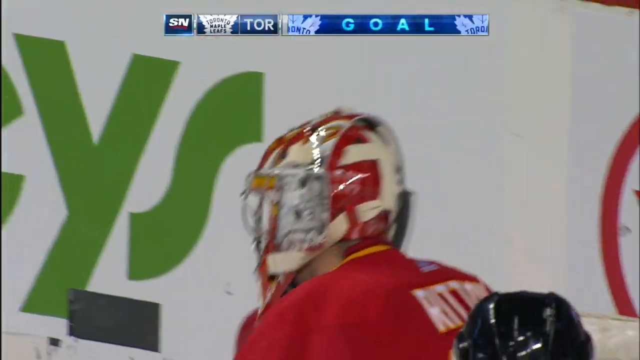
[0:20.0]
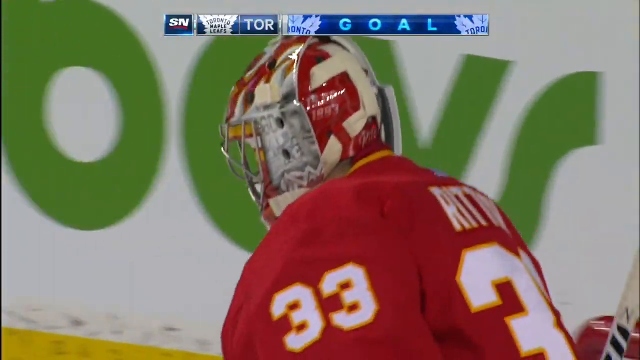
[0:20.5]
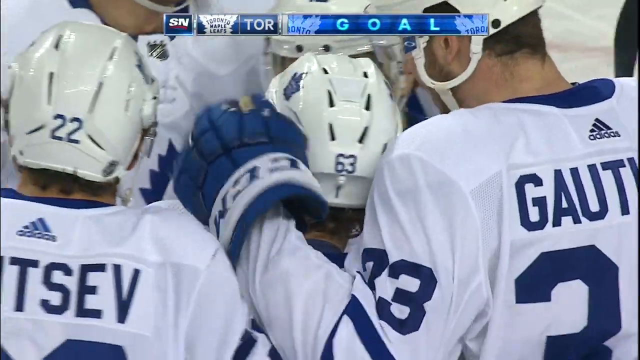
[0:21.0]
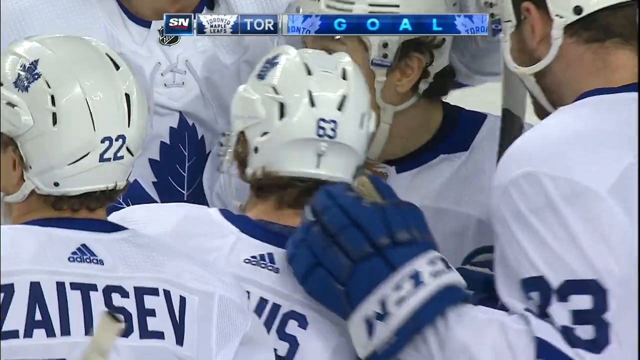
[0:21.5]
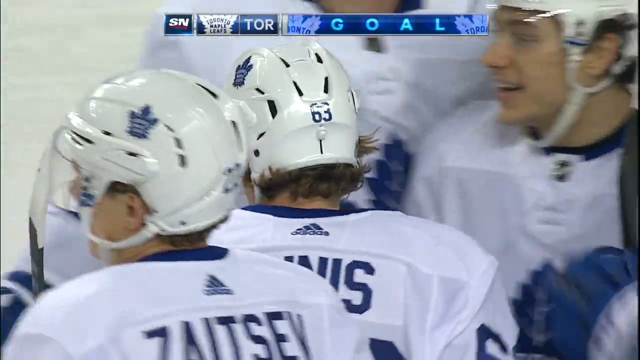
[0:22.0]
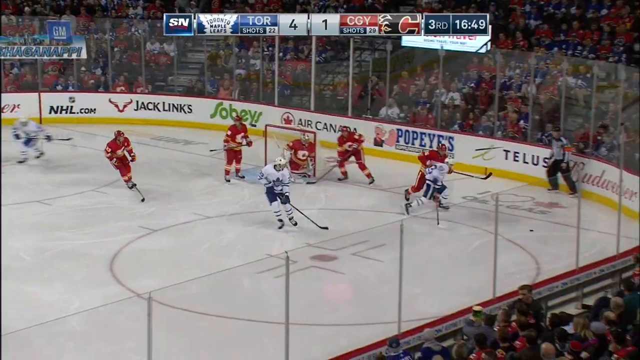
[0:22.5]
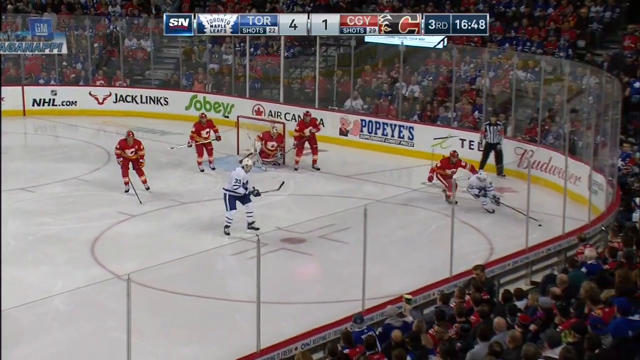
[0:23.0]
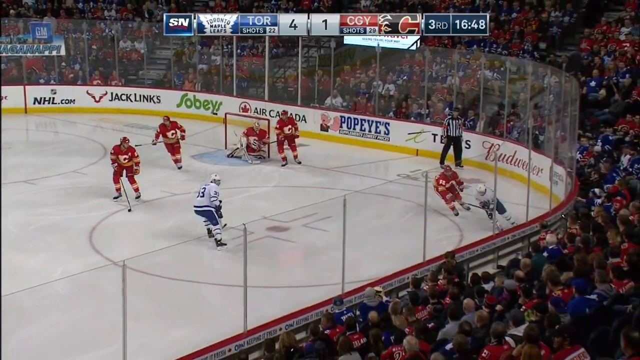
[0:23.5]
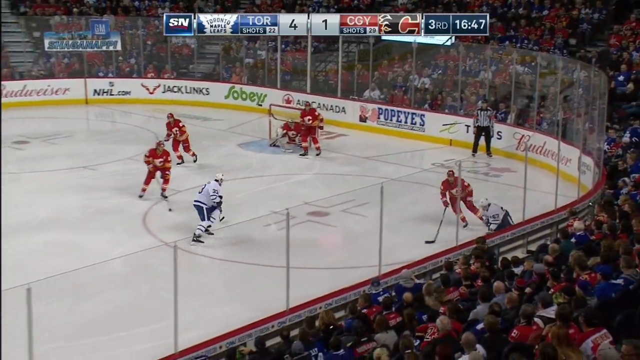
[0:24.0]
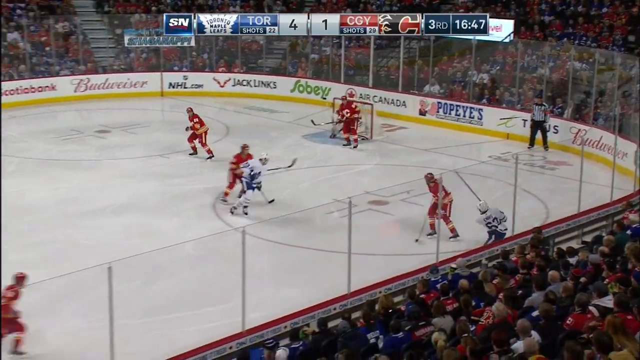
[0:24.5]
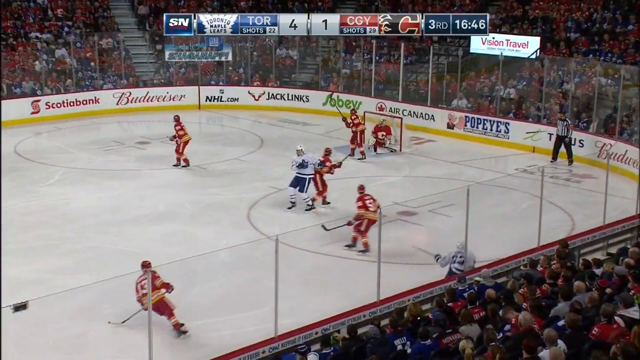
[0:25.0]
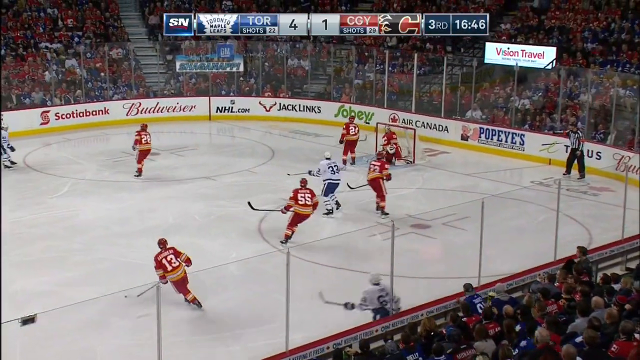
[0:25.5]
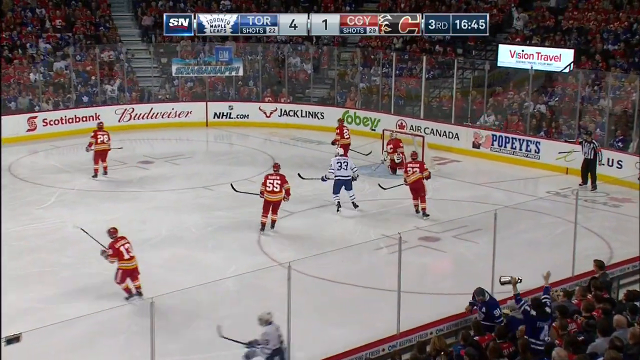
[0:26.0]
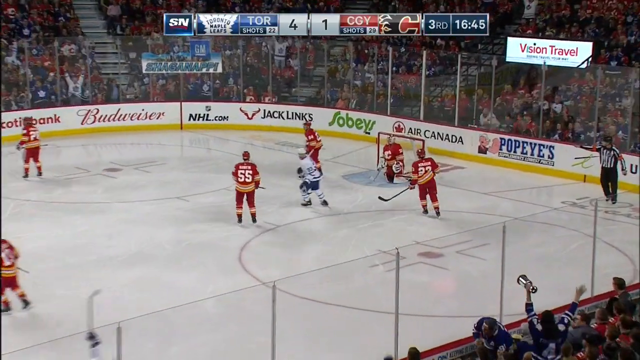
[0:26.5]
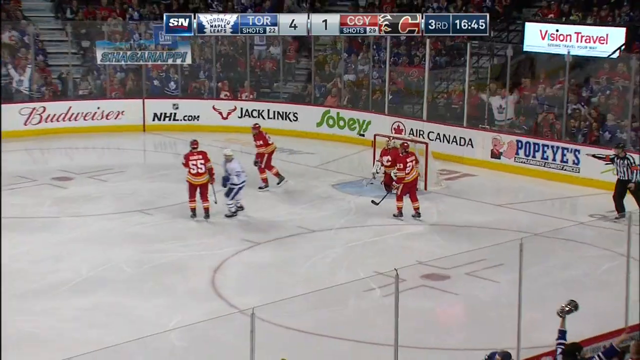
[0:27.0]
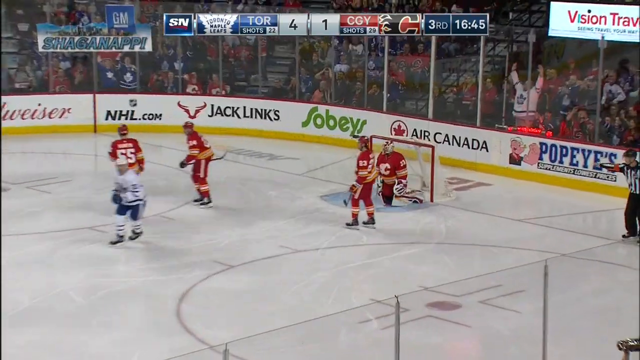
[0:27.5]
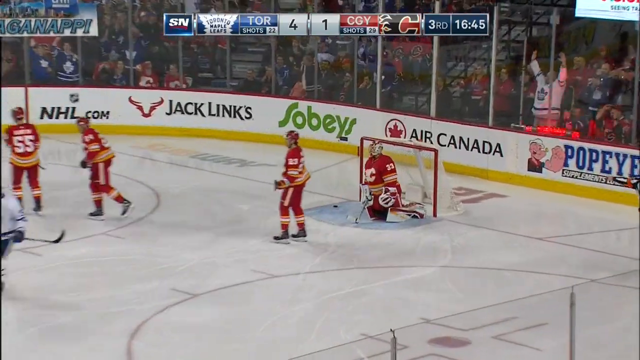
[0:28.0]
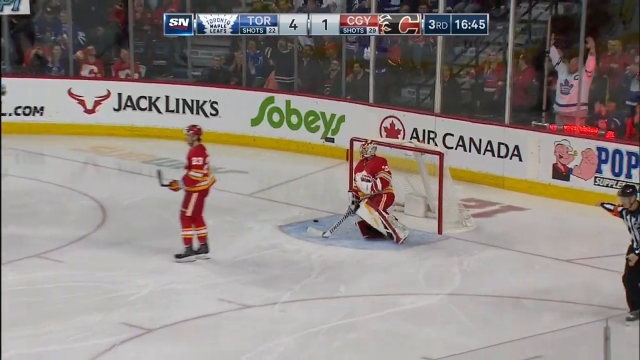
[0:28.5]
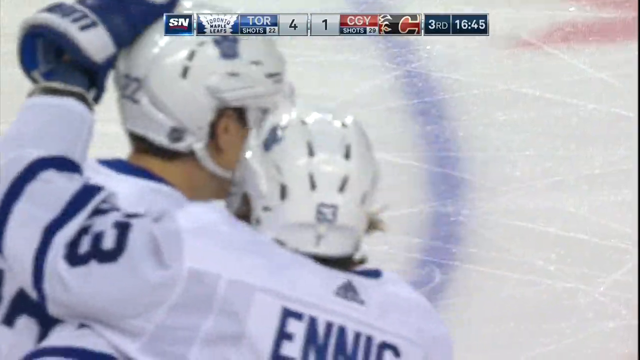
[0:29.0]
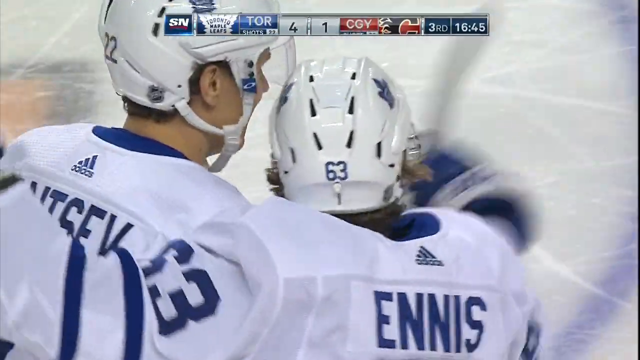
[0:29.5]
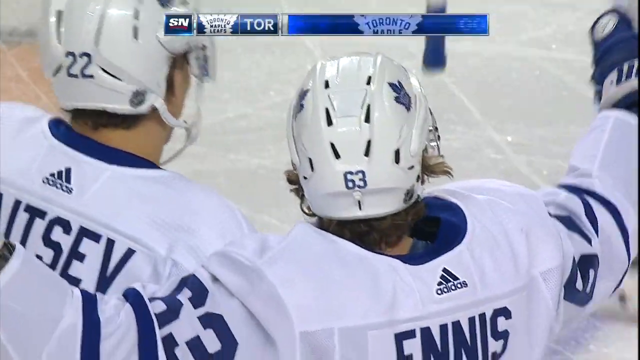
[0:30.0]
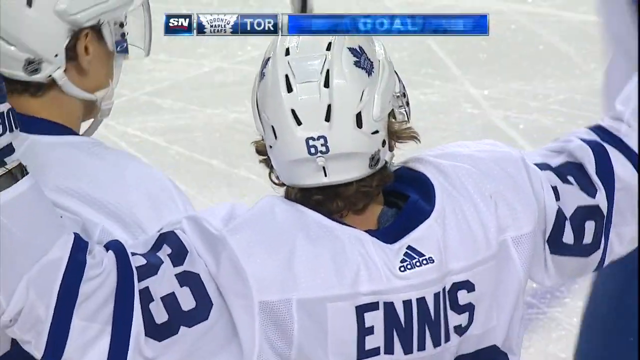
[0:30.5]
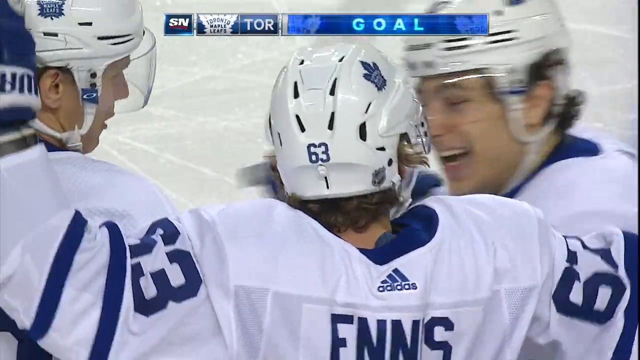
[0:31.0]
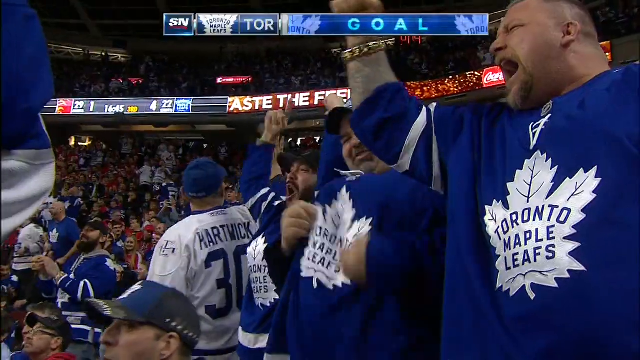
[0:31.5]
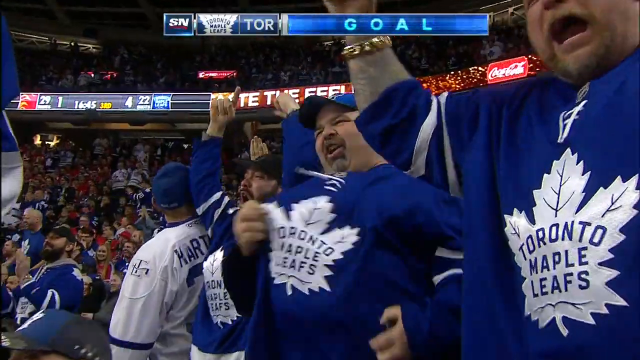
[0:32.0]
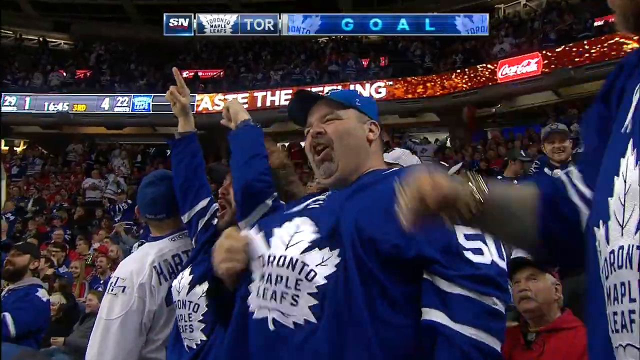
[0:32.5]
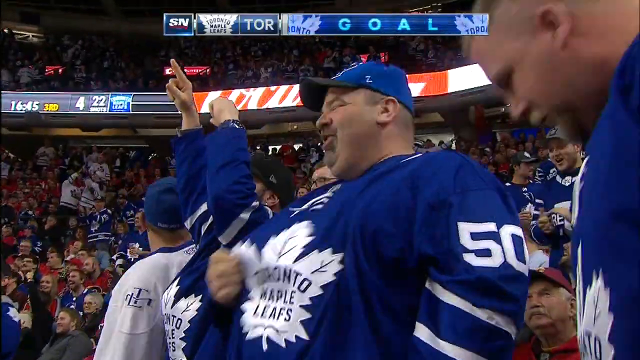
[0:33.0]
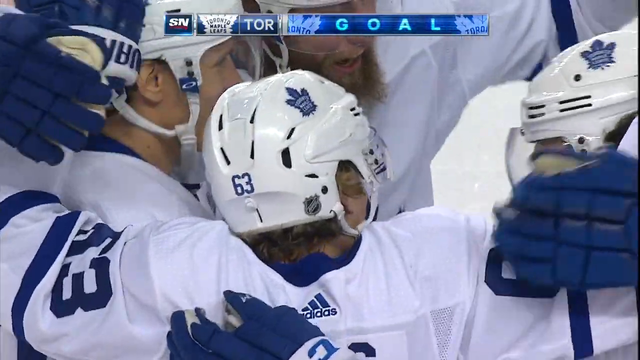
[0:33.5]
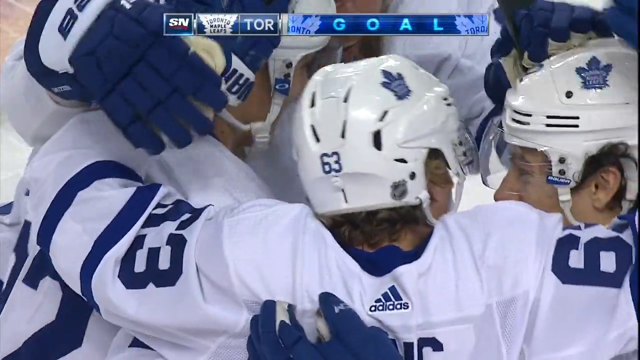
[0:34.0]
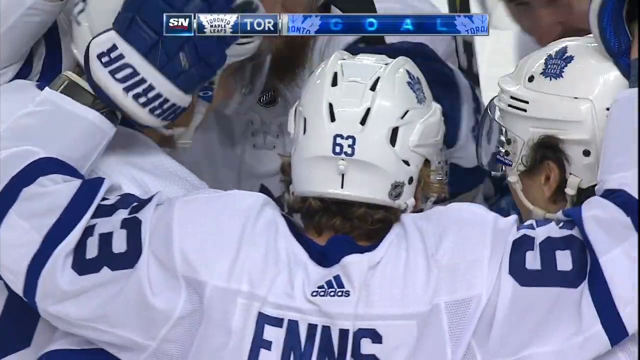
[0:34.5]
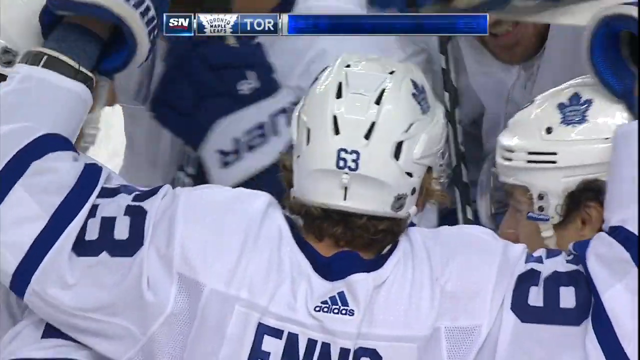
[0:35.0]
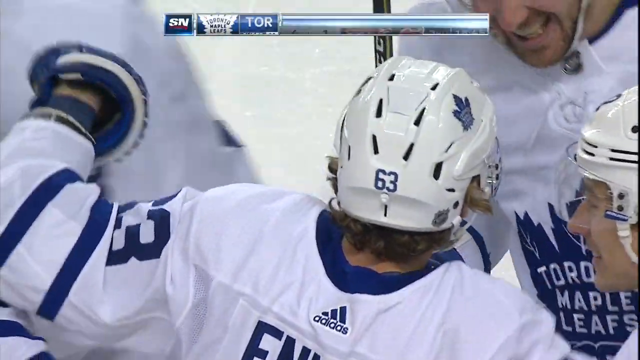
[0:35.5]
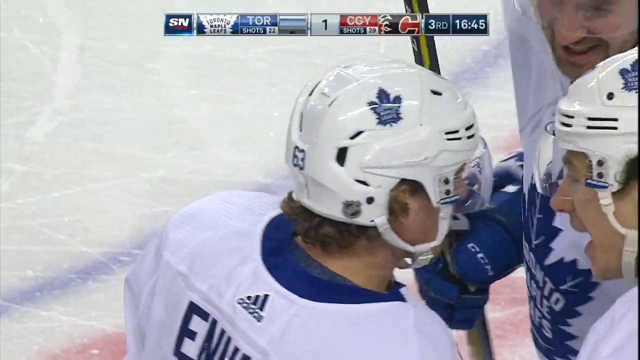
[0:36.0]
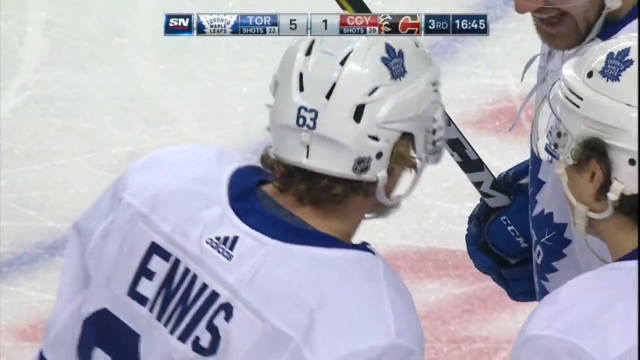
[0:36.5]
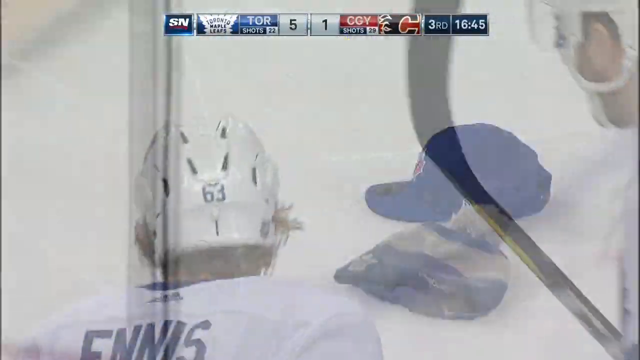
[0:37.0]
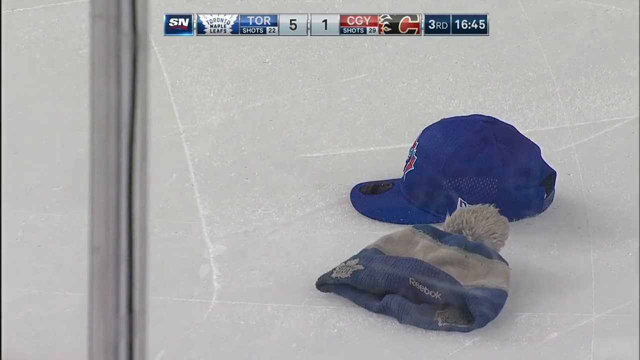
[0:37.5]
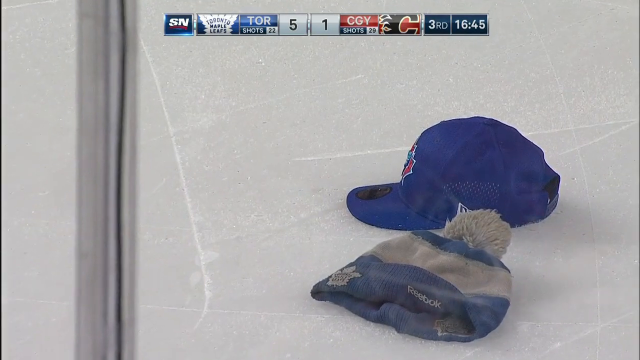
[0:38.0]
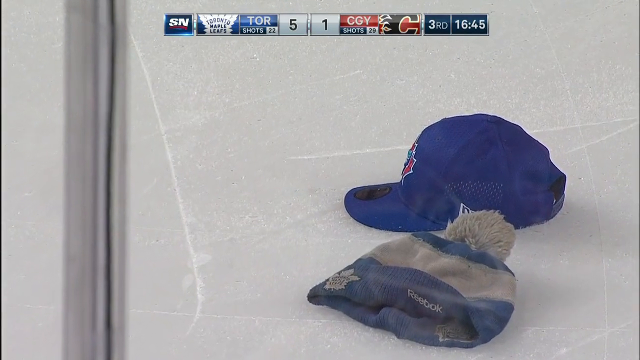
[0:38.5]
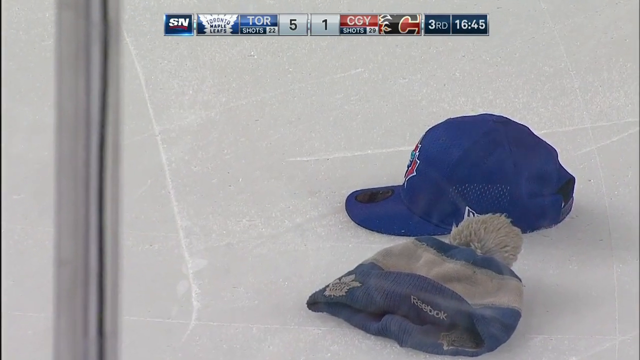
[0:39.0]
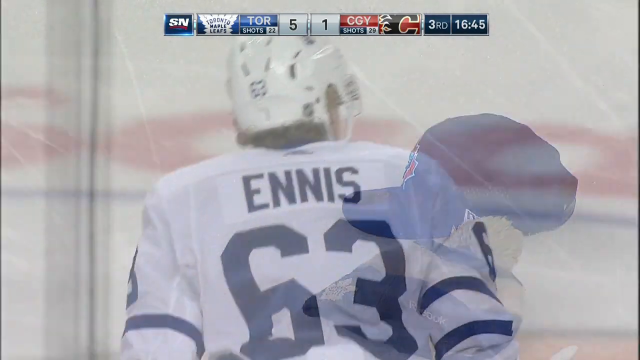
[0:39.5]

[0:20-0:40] The Toronto Maple Leafs players are in a team huddle. They break up the huddle and move back onto the field to play. The scene changes to the players on the field. The Toronto Maple Leafs players get in a huddle again, wrapping their arms around each other's shoulders and congratulating each other after hitting the puck into the goal; the Calgary Flames goalie misses blocking the puck. A new play follows with the players skating on the ice, and the Toronto Maple Leafs once more congratulate each other with their arms around each other's shoulders in a huddle. The screen then changes to Toronto Maple Leafs fans standing up out of their seats, cheering with their arms raised above their heads.